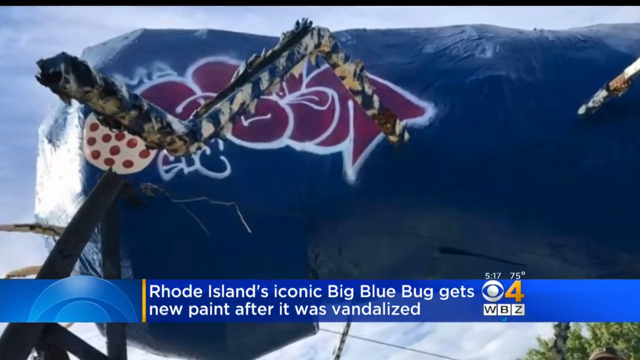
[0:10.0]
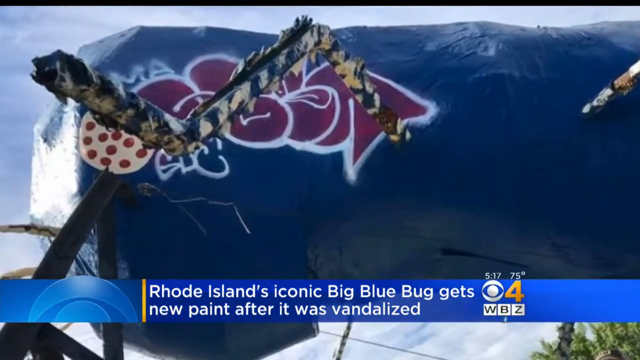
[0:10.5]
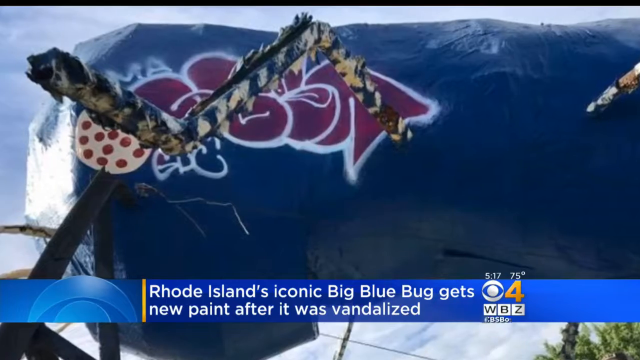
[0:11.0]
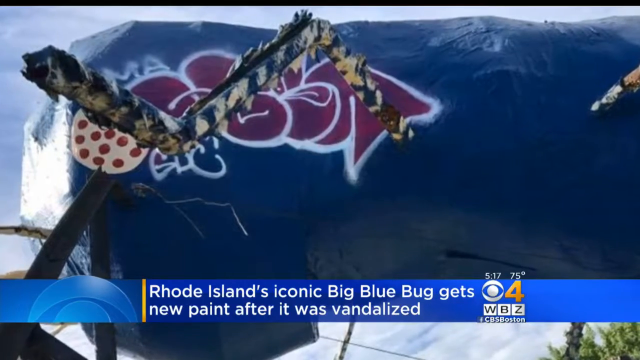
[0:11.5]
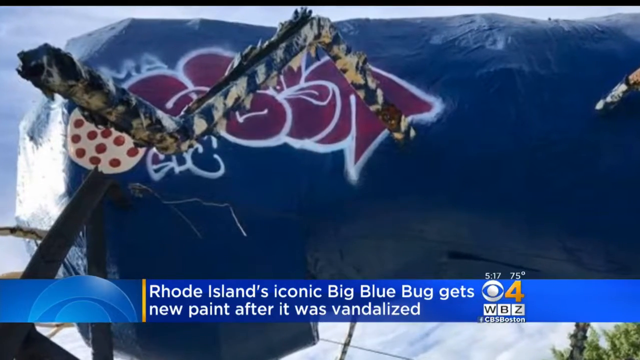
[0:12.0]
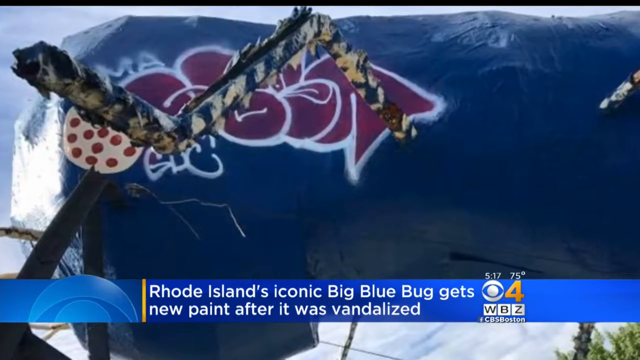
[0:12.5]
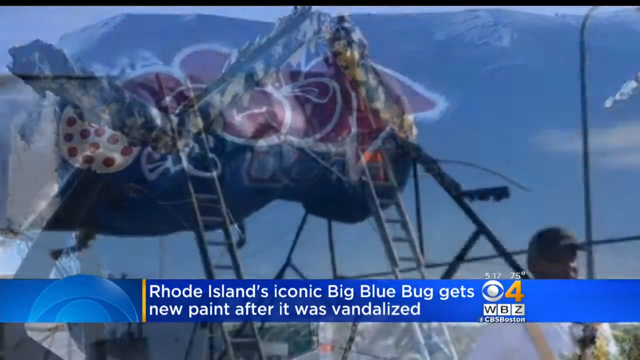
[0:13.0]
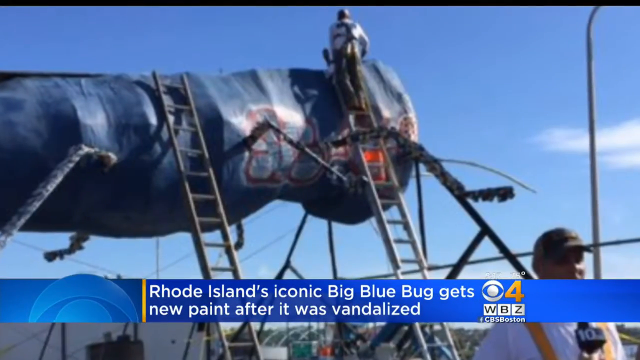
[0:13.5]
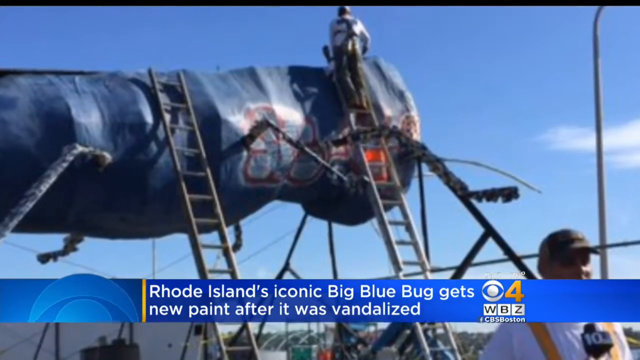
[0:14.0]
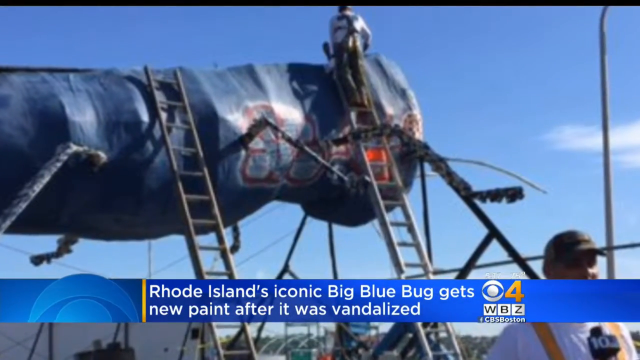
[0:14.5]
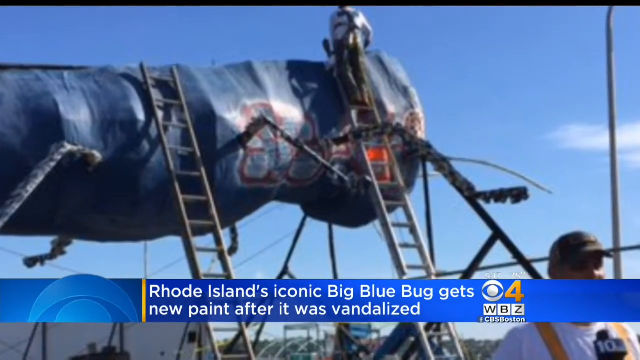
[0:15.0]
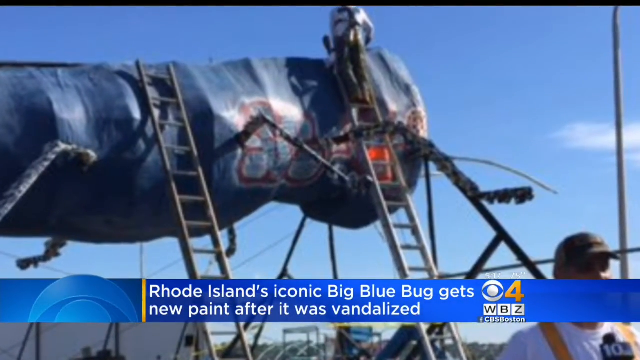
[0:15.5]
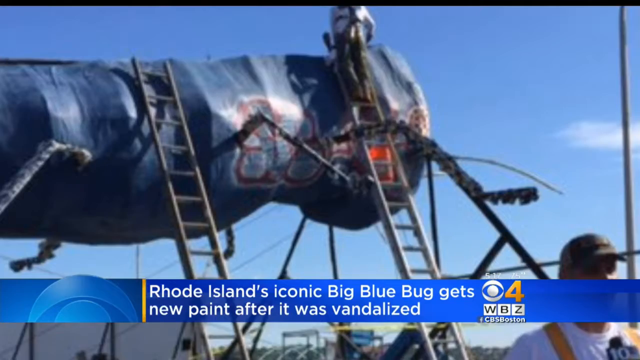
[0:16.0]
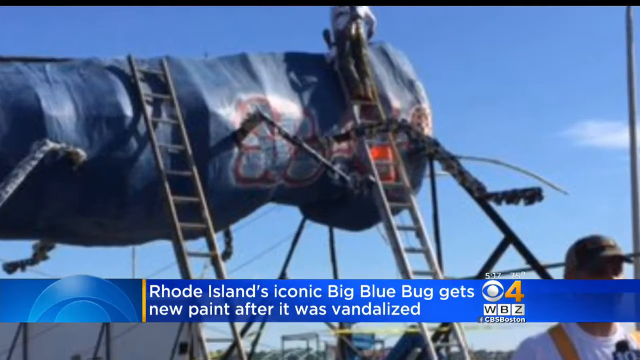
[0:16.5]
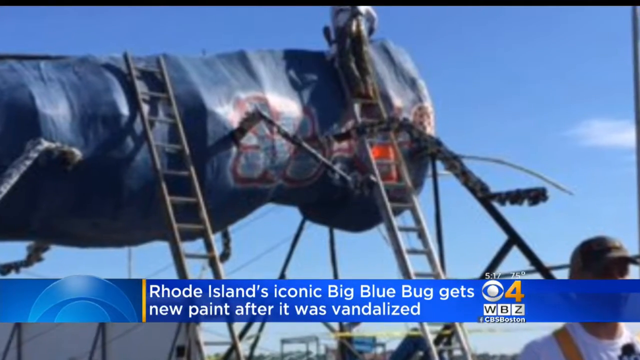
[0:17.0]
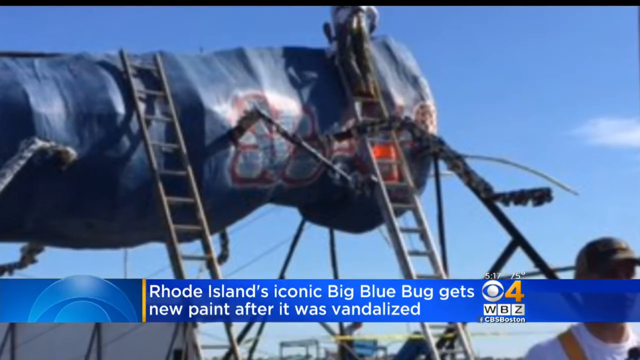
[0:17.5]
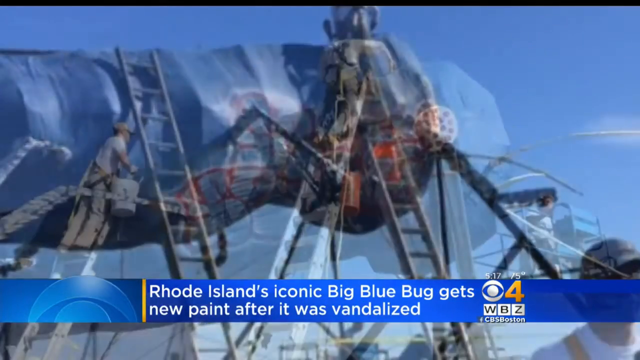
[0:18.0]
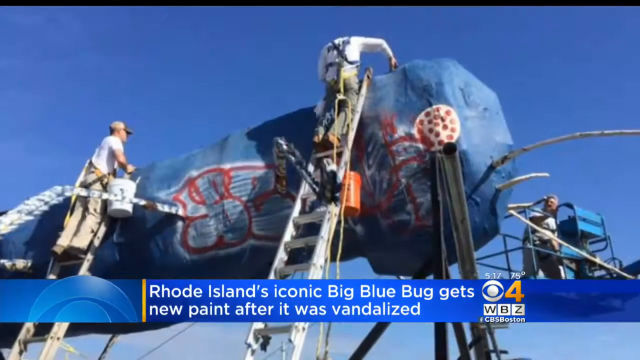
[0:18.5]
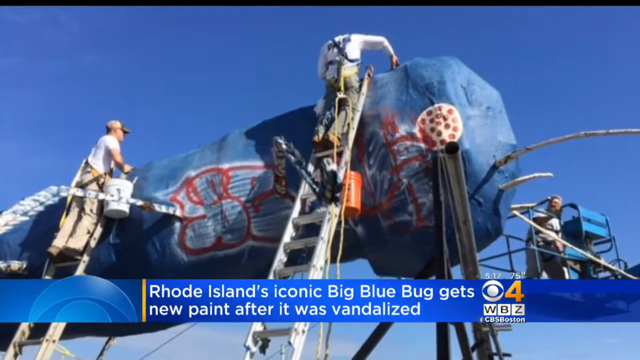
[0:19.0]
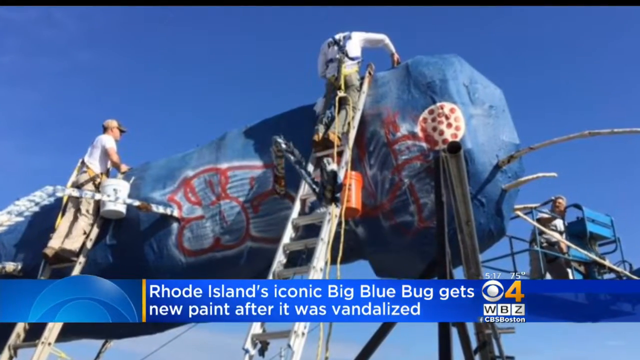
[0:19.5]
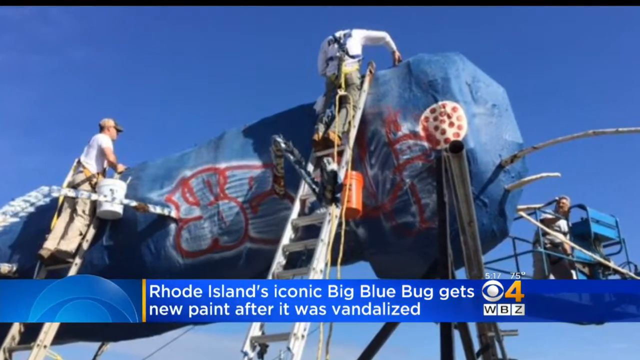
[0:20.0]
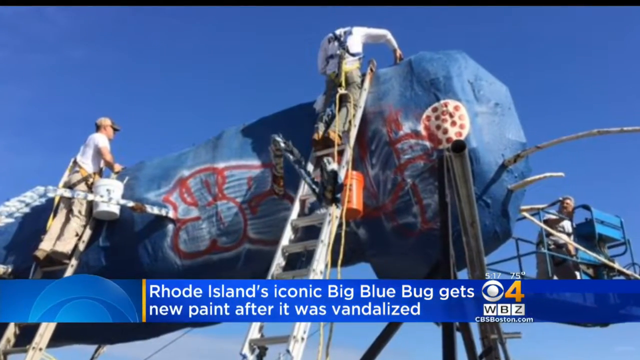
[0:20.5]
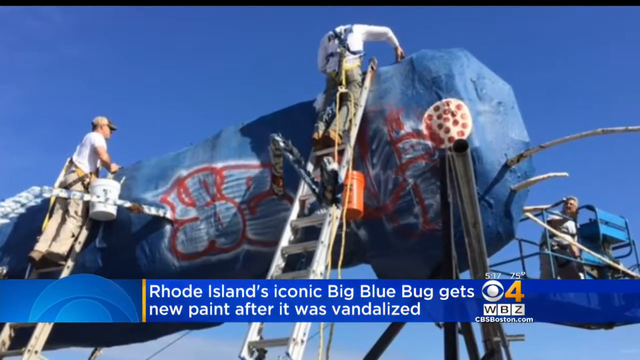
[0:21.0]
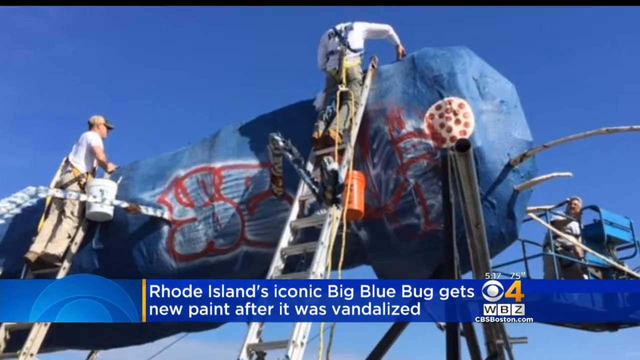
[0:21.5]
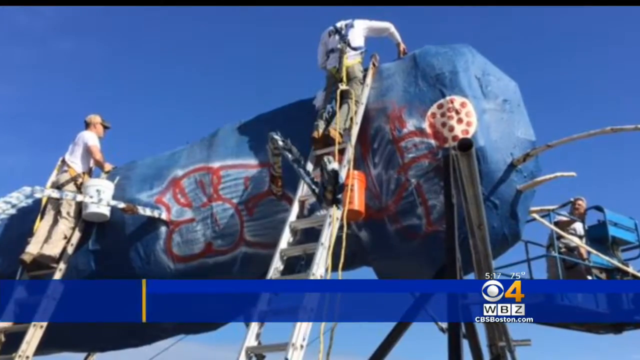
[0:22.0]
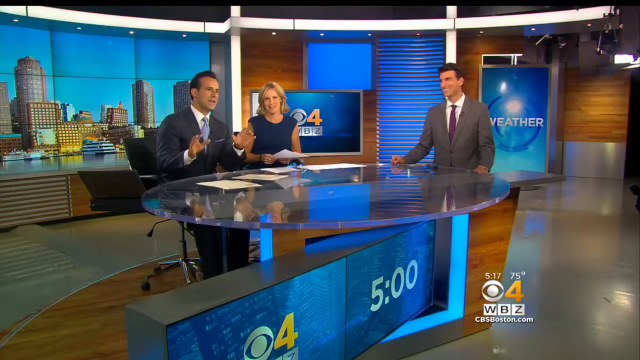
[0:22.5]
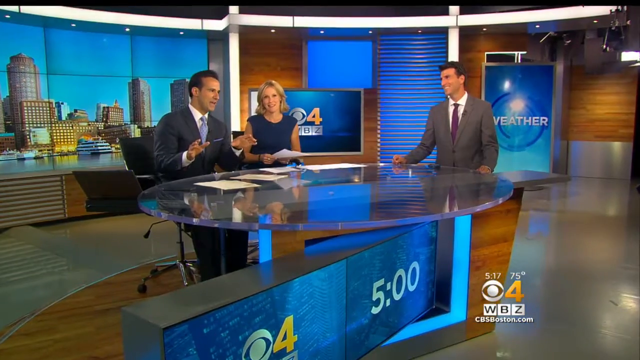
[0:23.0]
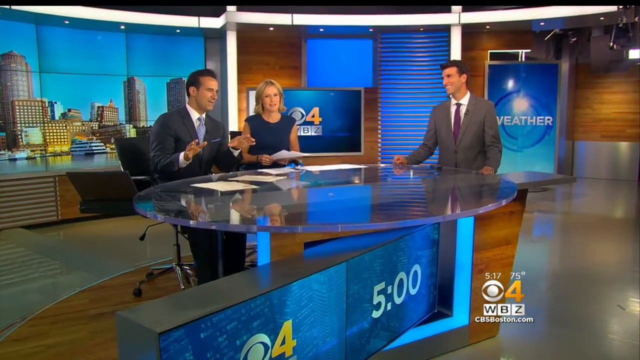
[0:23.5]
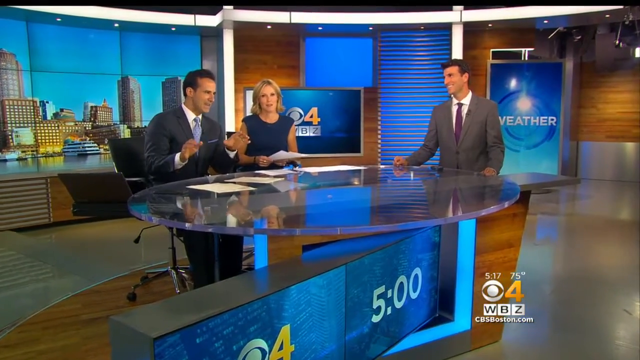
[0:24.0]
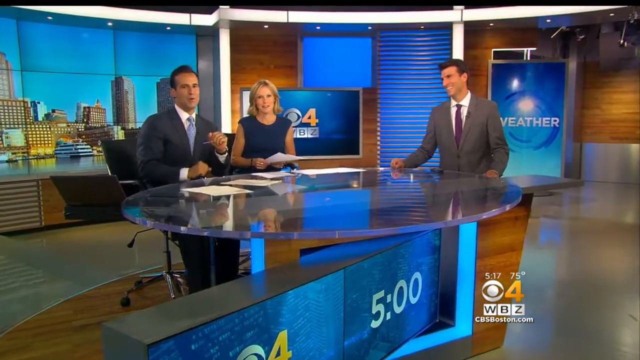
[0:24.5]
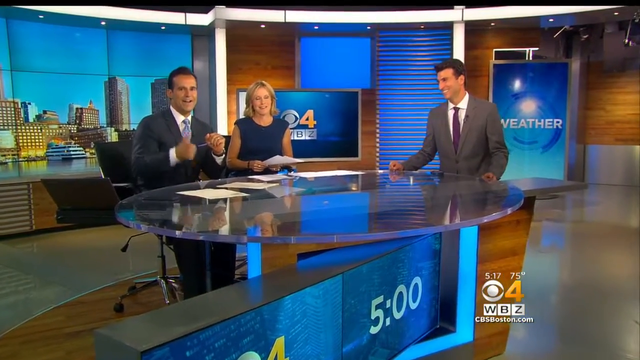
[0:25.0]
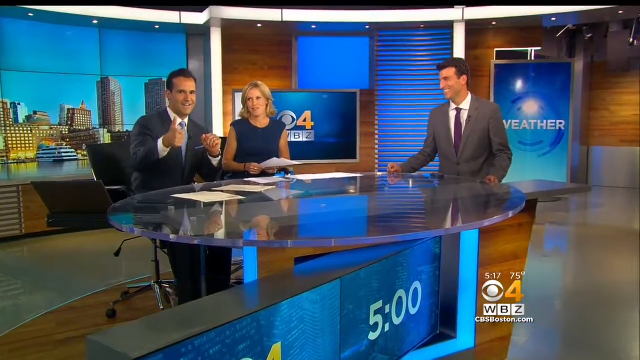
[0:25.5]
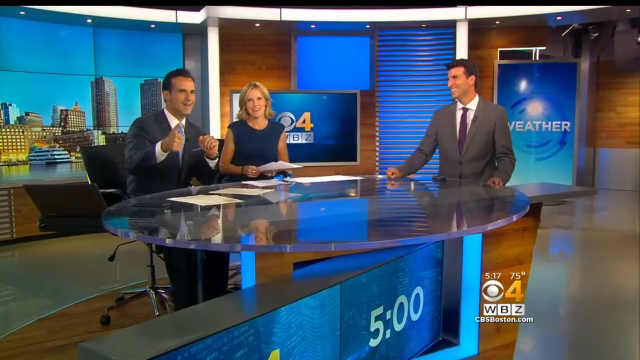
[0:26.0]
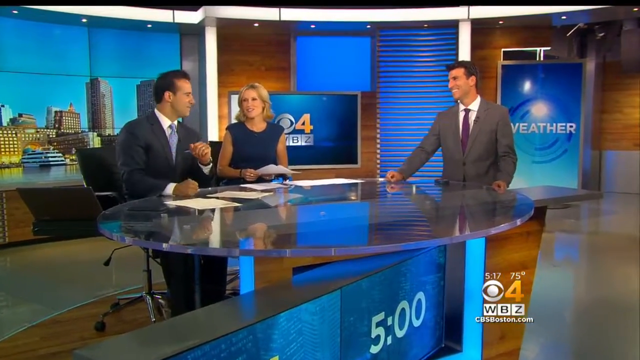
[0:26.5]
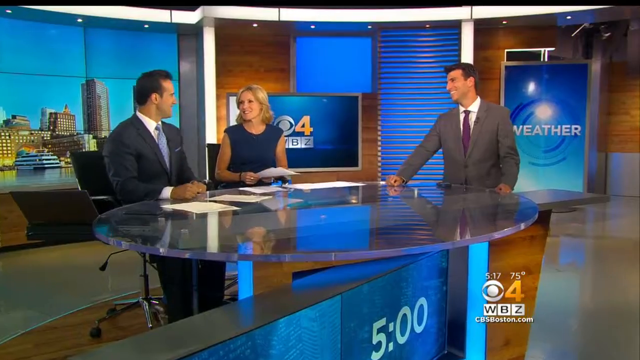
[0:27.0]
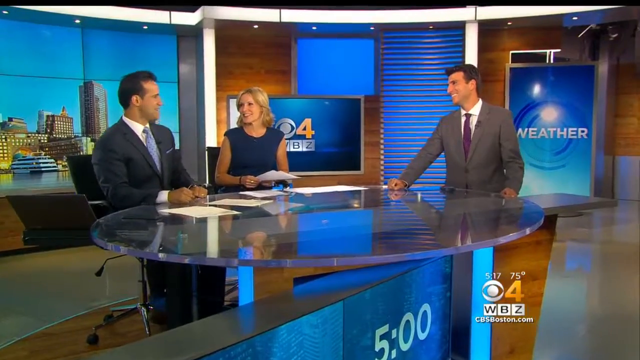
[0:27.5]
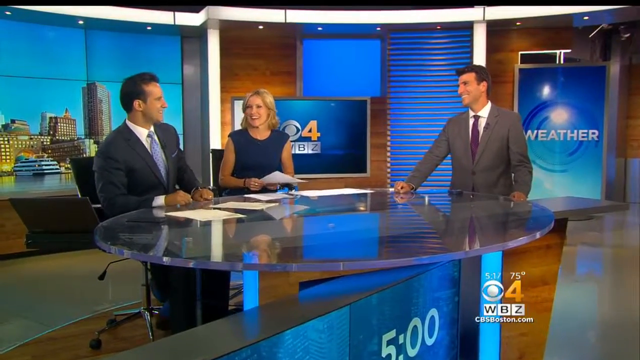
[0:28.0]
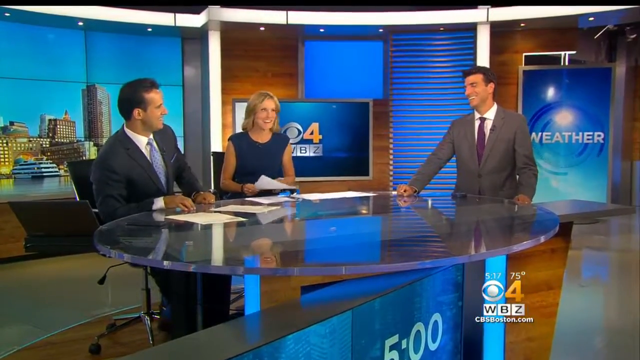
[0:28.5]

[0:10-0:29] The broadcast shows the headline "Rhode Island's iconic big blue bug gets a new paint after it was vandalized." The structure has been painted blue, with reddish paint and reddish graffiti on it. It is daytime, and the sky is blue with partly white clouds. Ladders are visible, one person is painting, and another person at the bottom right, wearing a cape, looks at the camera. In another view, three workers are seen: two are on the ladder painting, and one is standing in a crane-like feature looking at the paint. The broadcast then returns to the newsroom, where there are three news anchors: a man and a woman are seated, and another man is standing. A cityscape appears on the screen in the background. It is five o'clock.